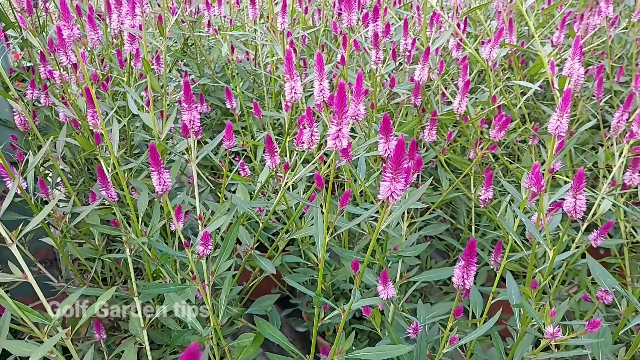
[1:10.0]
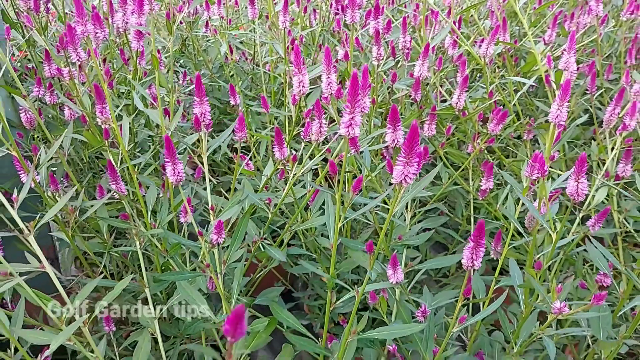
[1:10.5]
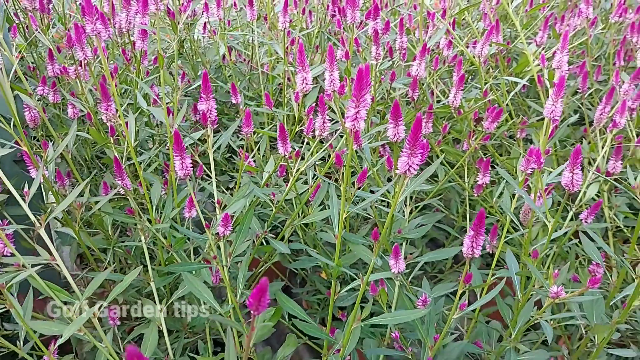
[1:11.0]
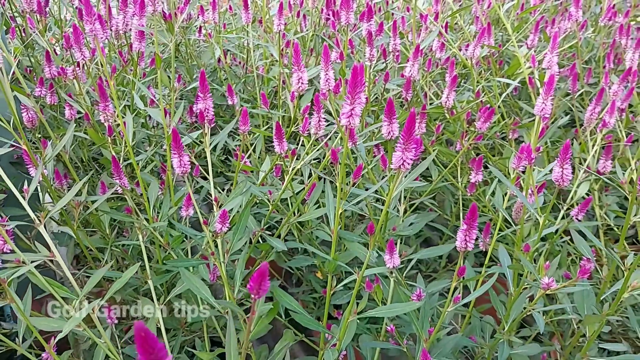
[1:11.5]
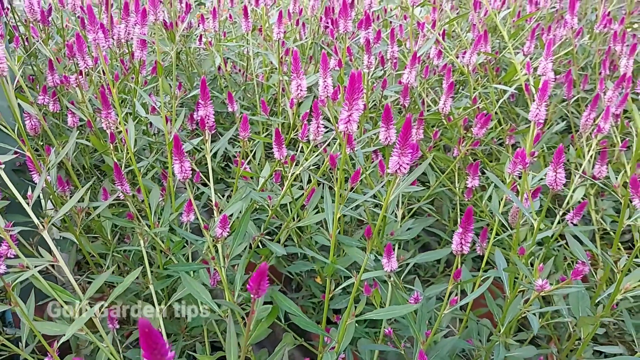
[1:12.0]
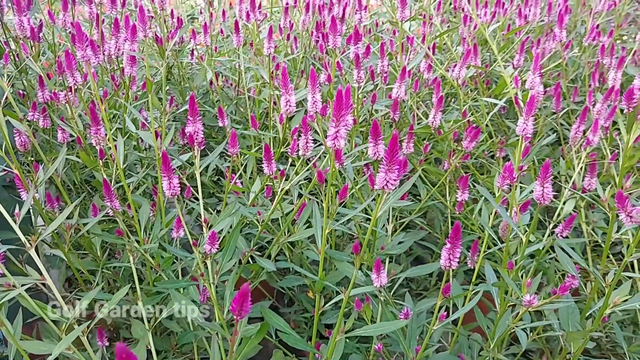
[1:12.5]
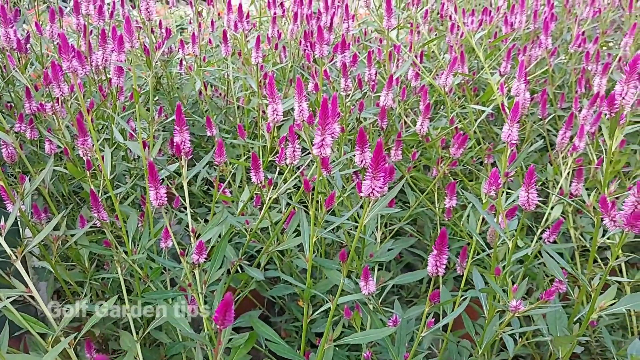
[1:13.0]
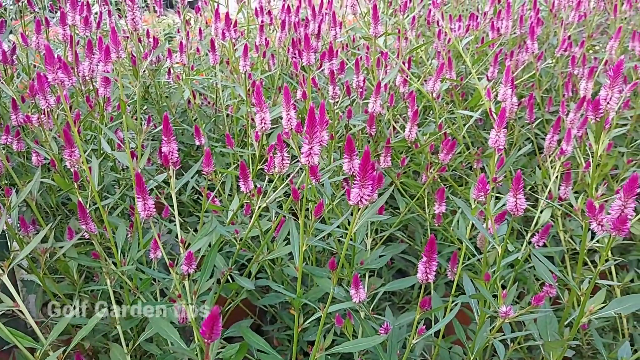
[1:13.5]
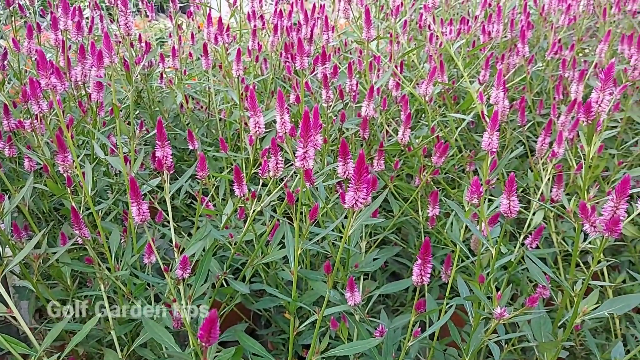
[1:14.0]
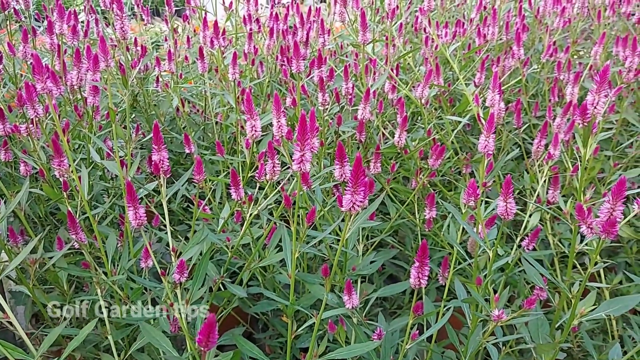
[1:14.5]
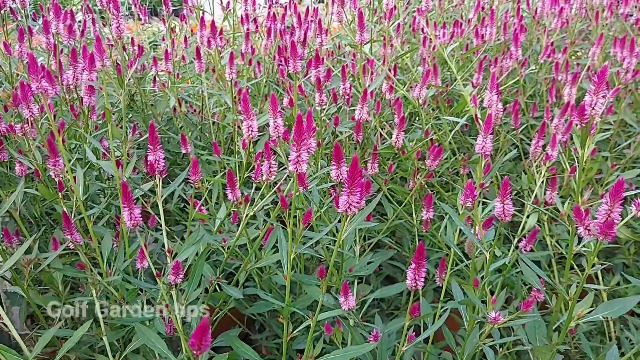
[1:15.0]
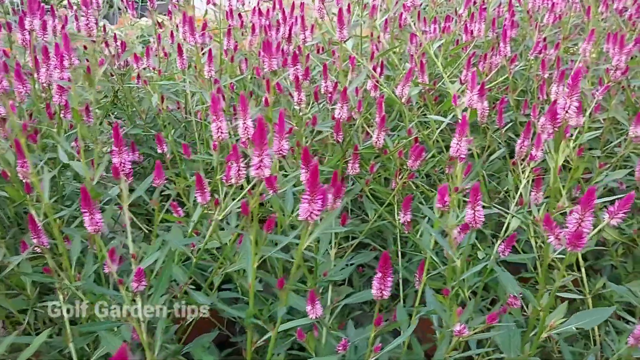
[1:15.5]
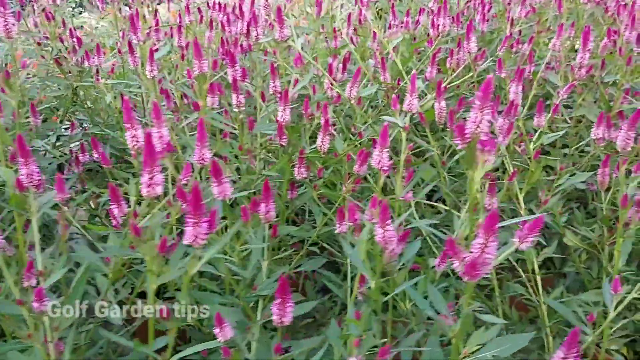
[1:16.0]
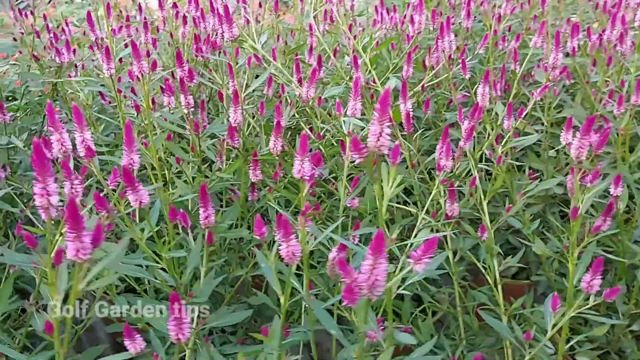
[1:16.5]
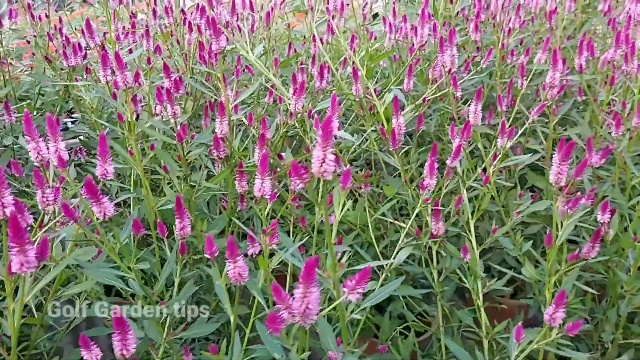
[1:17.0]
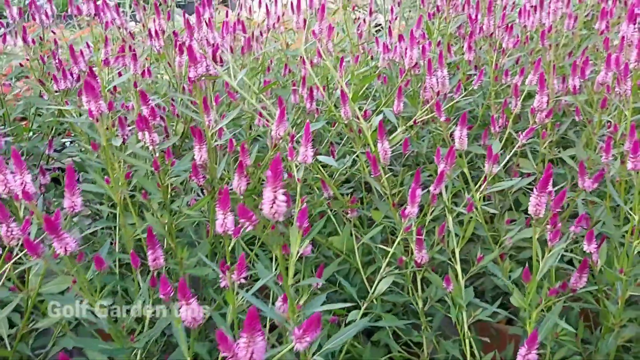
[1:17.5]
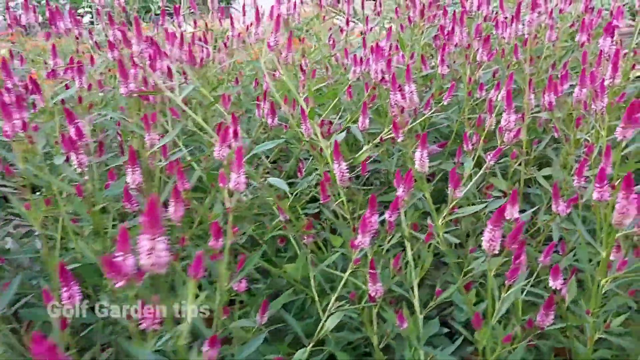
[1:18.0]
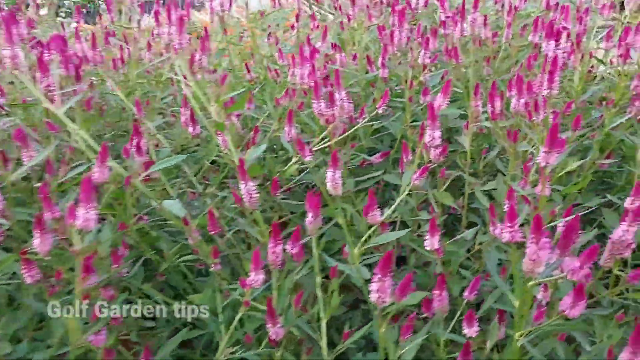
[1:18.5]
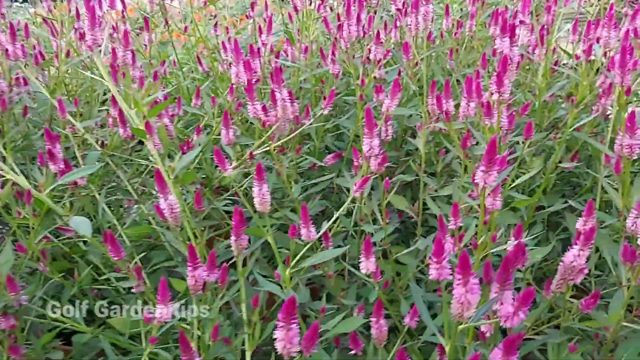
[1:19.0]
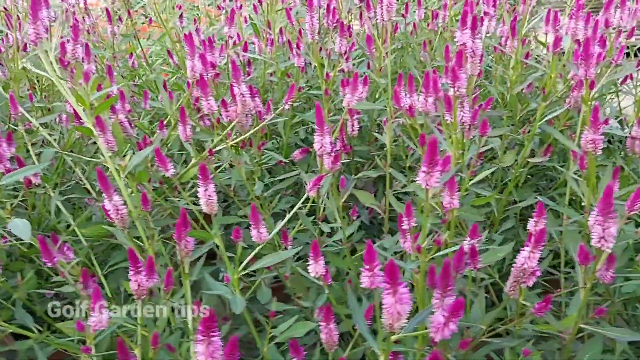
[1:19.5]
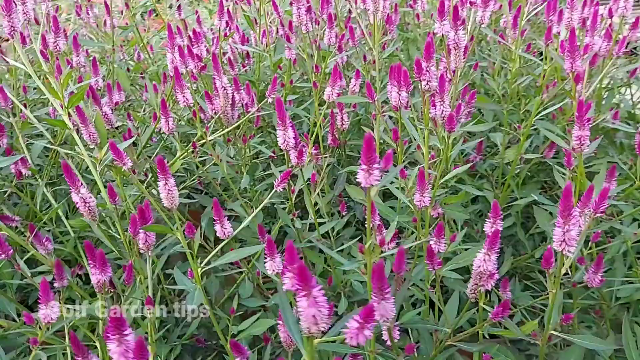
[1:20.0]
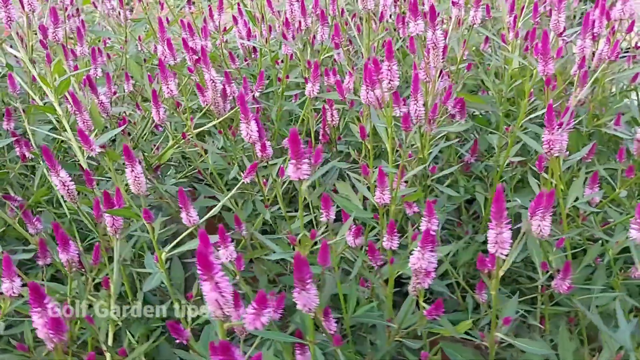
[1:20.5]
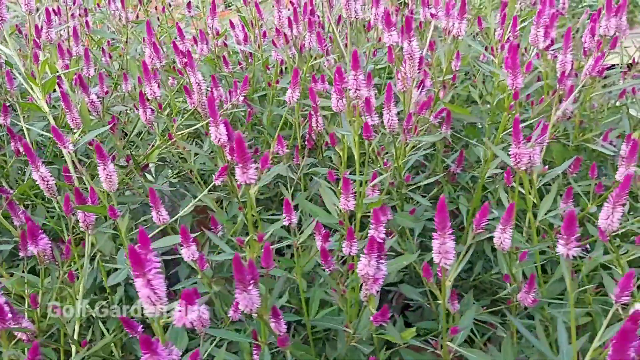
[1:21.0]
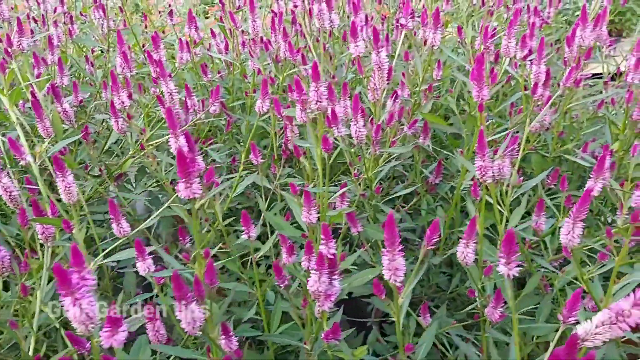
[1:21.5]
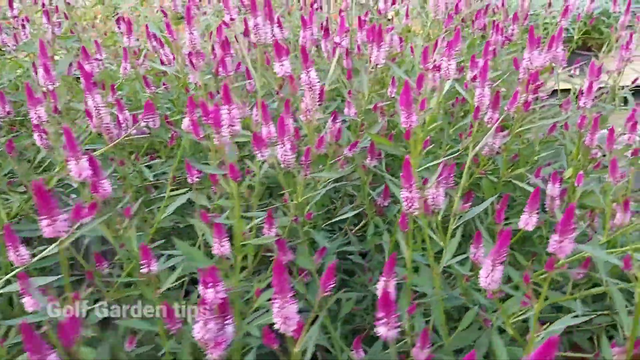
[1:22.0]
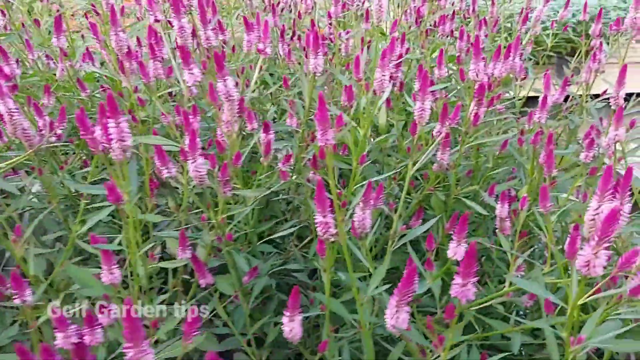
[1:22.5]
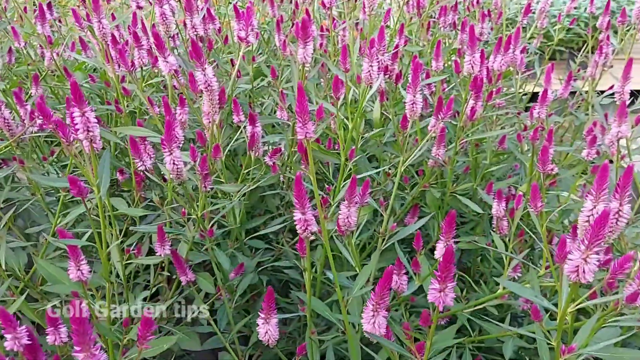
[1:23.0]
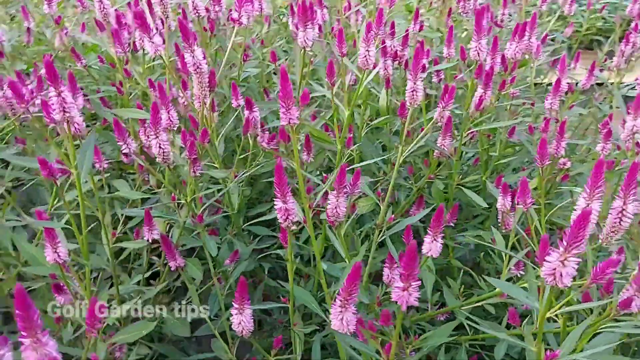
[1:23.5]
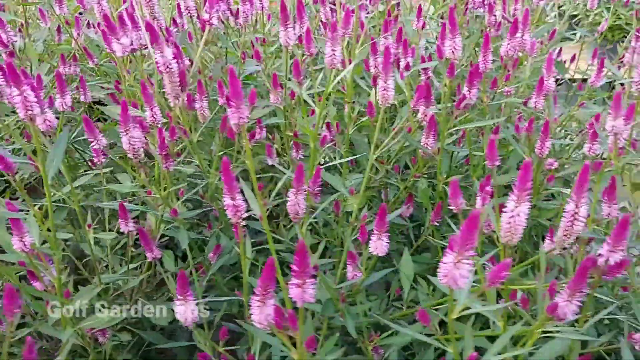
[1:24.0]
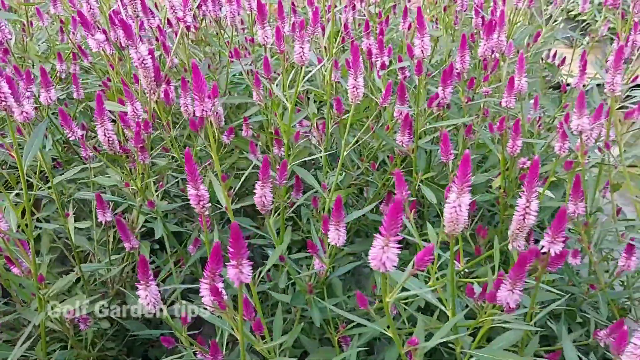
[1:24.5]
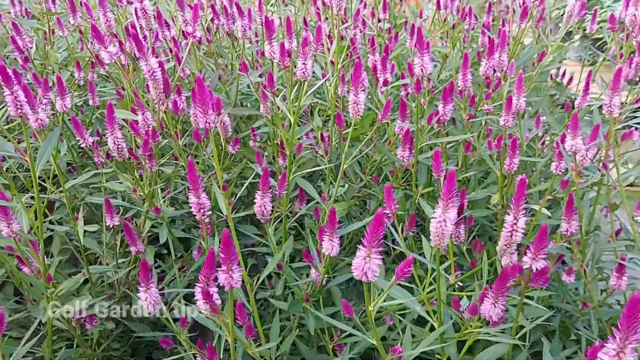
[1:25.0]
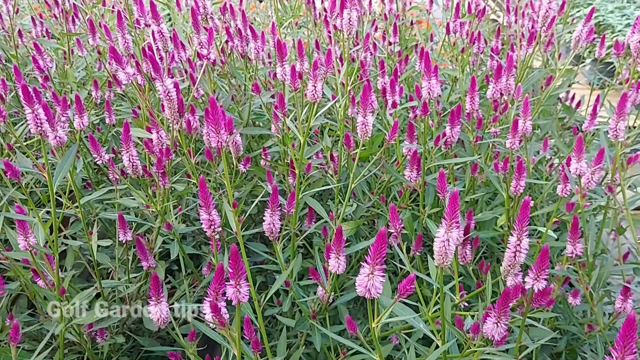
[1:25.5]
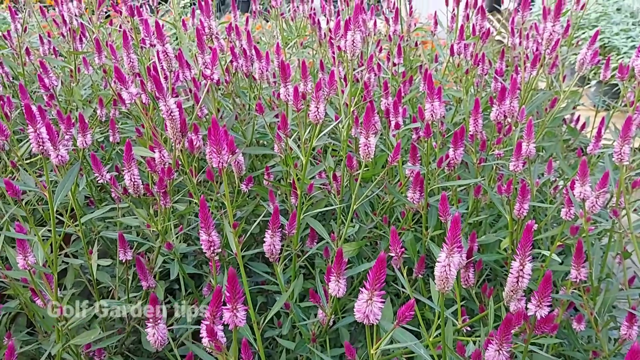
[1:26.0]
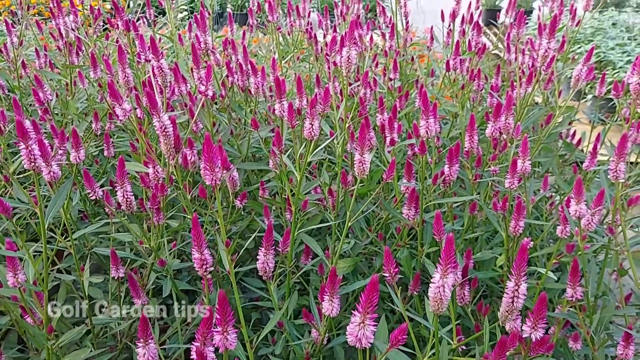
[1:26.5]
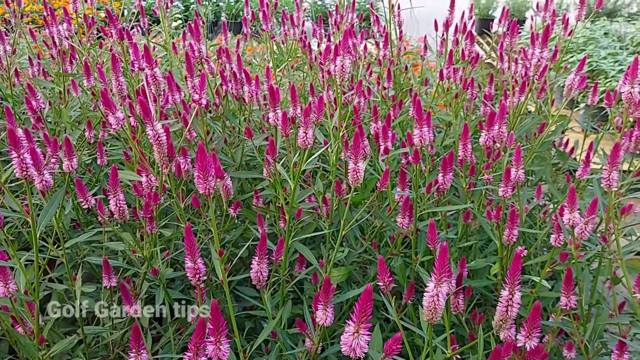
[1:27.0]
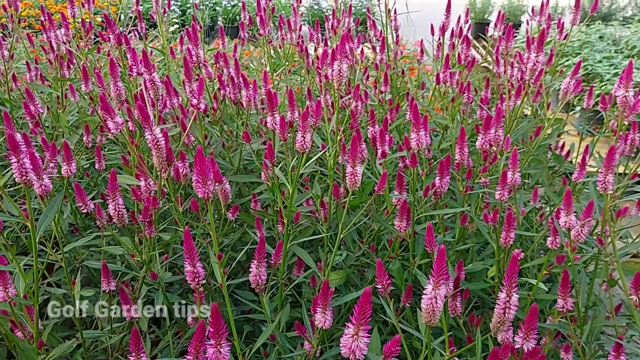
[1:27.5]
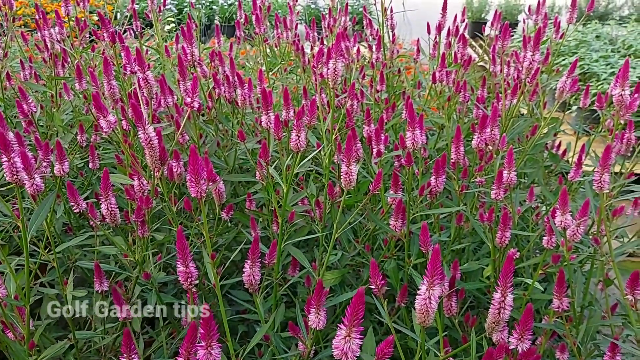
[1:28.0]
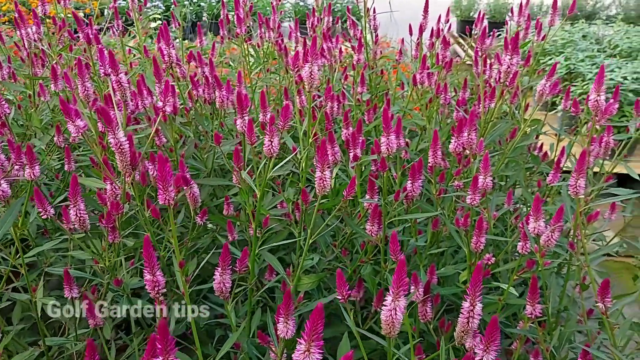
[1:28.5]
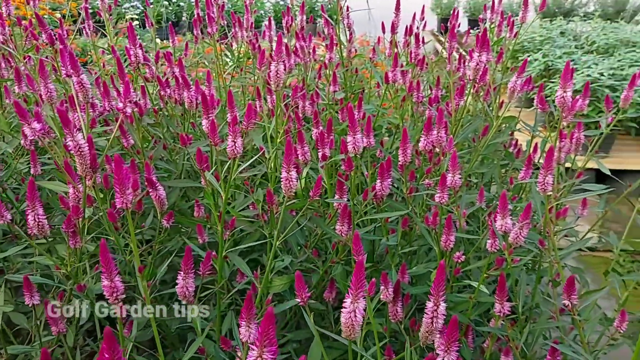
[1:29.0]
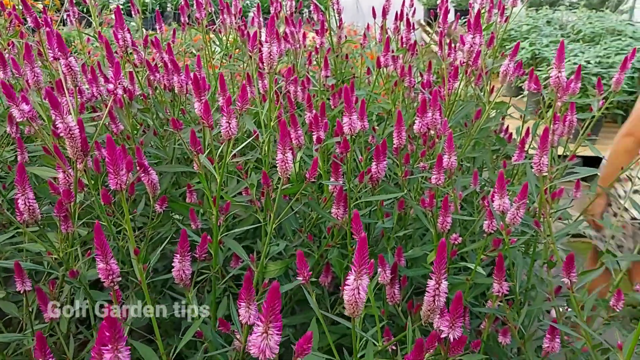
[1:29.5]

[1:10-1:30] The screen continues to read "golf gardening tips", but nothing else appears on screen, so the tips are being narrated. The camera pulls out to show the flowers being focused on, along with a car behind on the curb at this part of the display. The person continues to move around the plant as though explaining something. Panning up slightly reveals other plants in the background and a child exploring the garden. The background plants are also in pots and probably for sale, including a combination of decorative yard-style flowers, marigolds, poppies, other potted plants, and a potted white flower. Off to the right-hand side is an assortment of indoor green houseplants in individual pots of varying sizes. Toward the back wall is a section of pale yellow trellis, as though sectioning that part of the garden off from the rest of the space. When the camera pans all the way up, the street, the curb, a patch of grass, a parked car, and people walking by on the street are visible. All the plants in the garden are on raised, sort of tables or beds with drainage, and the floor is gravel.